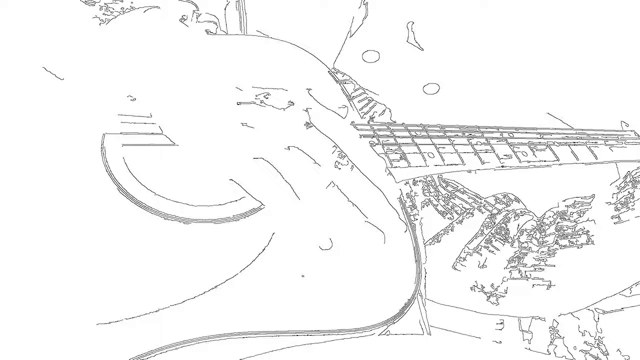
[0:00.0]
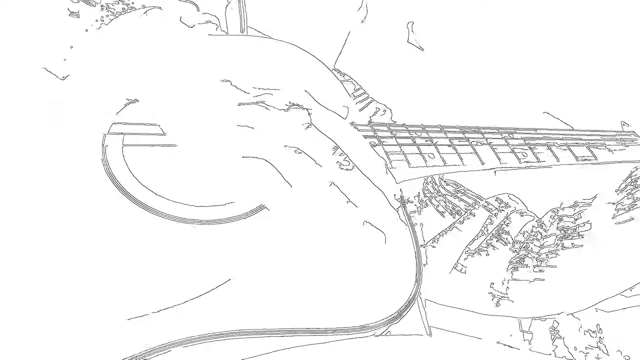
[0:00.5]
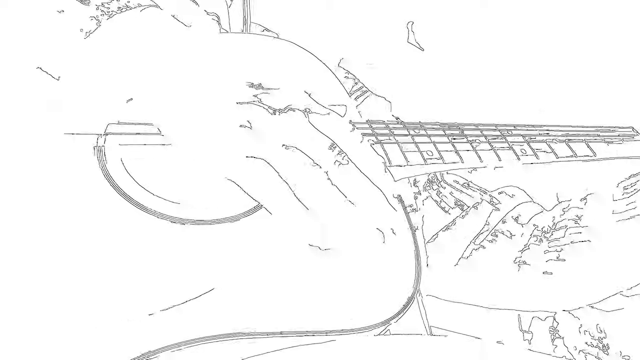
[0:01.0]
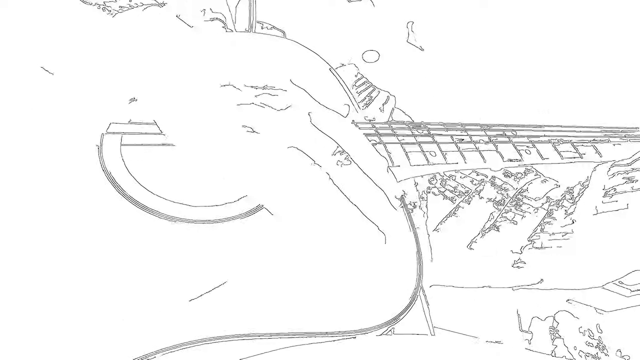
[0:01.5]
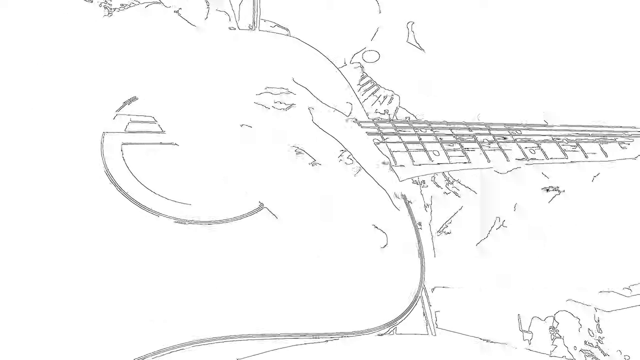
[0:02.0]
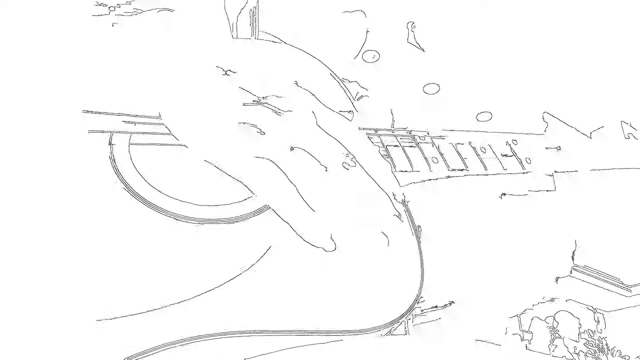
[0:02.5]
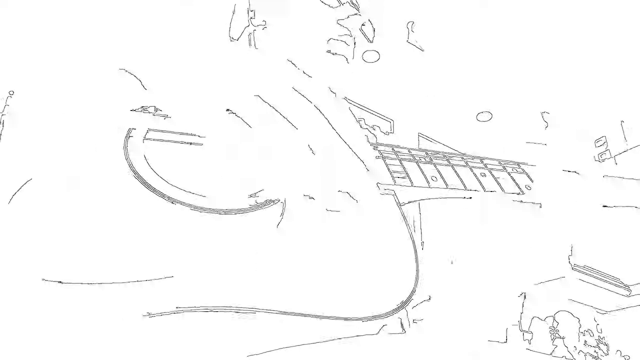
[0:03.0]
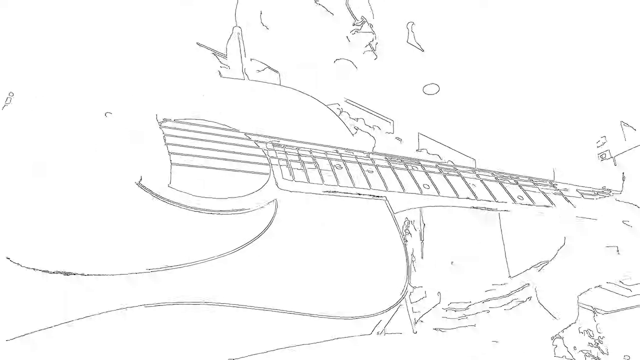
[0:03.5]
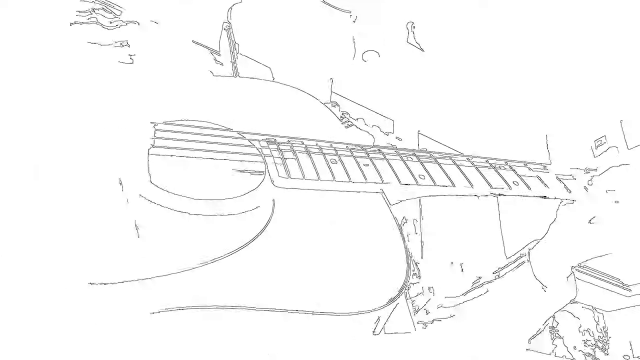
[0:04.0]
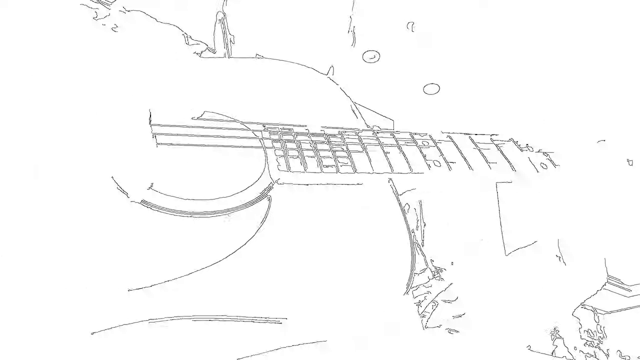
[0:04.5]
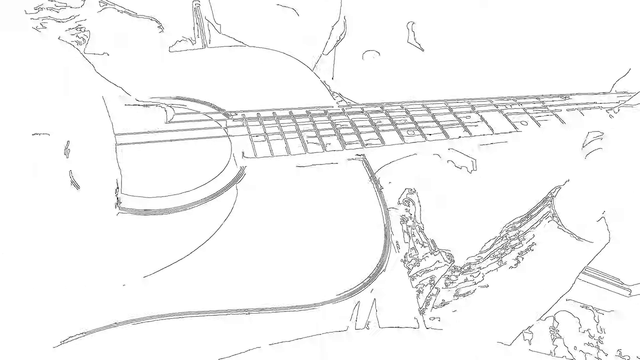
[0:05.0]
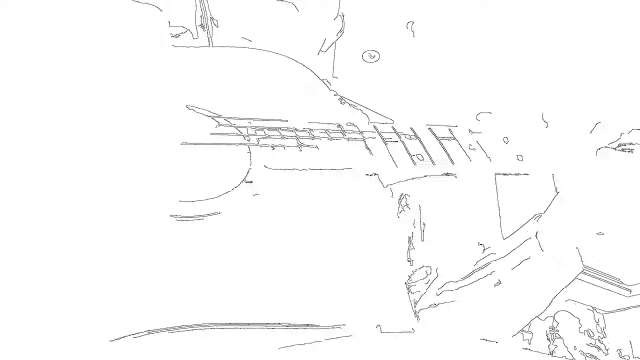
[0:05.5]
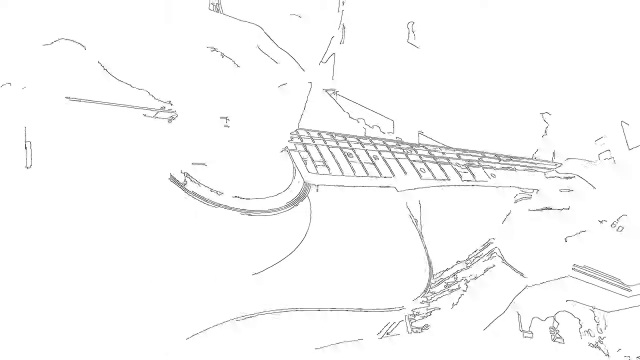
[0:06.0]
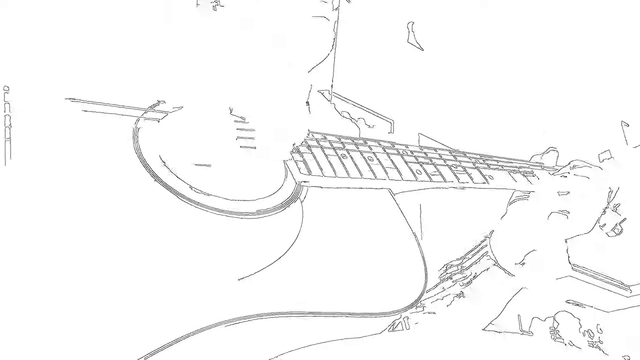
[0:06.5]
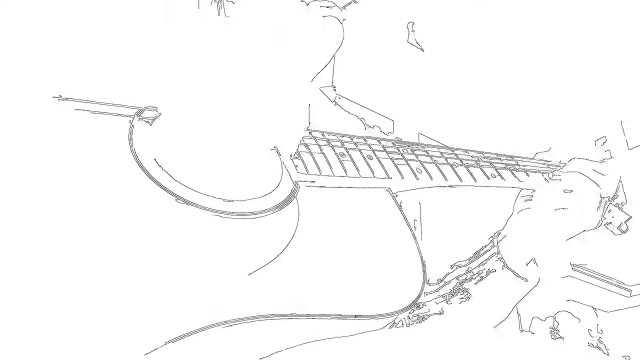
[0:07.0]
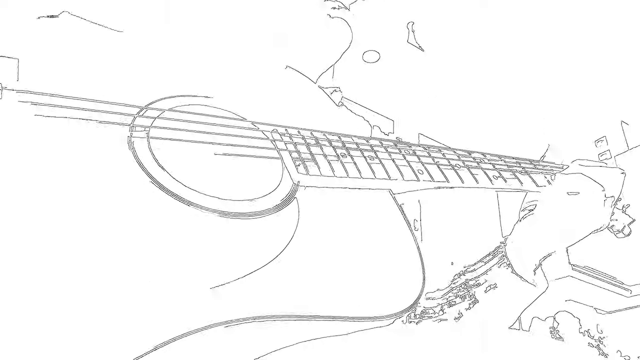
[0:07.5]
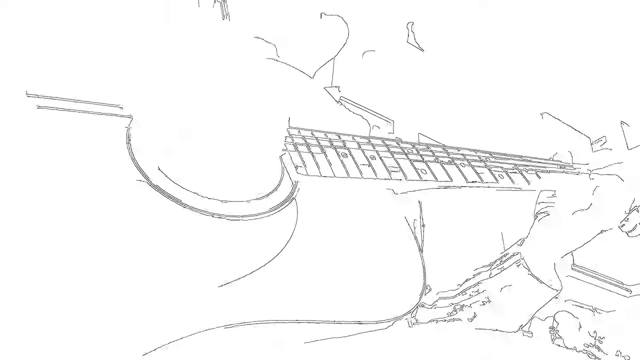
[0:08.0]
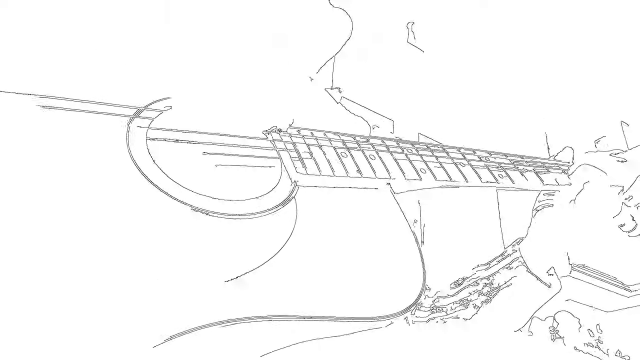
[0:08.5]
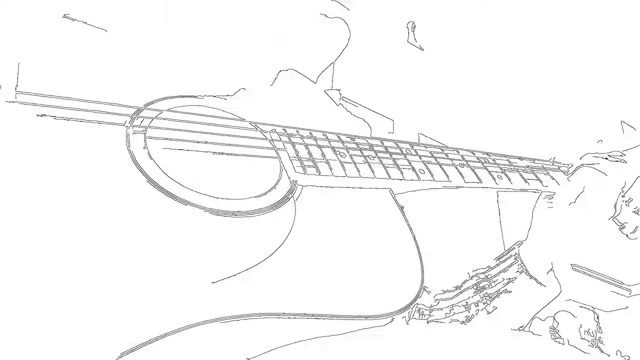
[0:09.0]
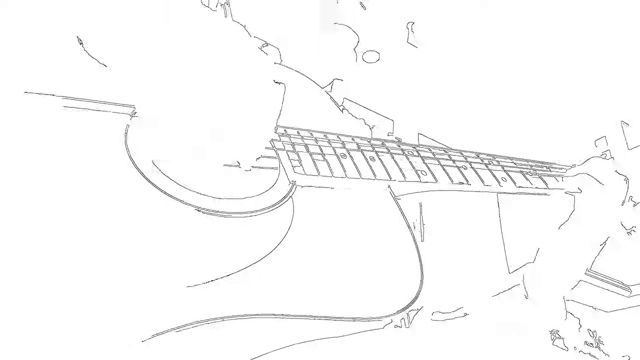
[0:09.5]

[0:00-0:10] The video is in a black-and-white illustration style with a stop-motion look; it is actually live footage that has had this effect applied with some sort of program. A man sits in what looks like a kitchen, playing the guitar. Behind him is what looks like the style of window found over a sink, and to the right is what looks like a set of cabinets with a box containing a kitchen appliance on top. The camera is at his eye level, as if it were on his knee, showing him playing the guitar. He appears to possibly be wearing a sweater, and he looks across as though at something across the room or at the camera in front of him.